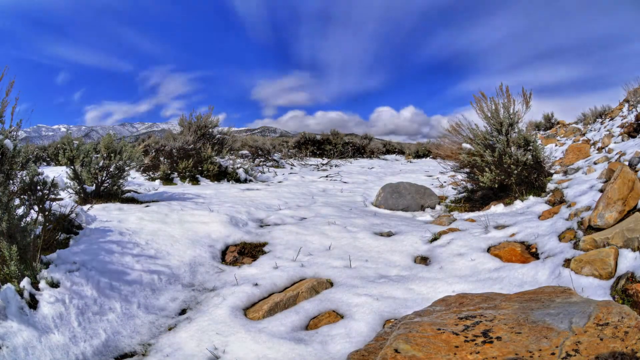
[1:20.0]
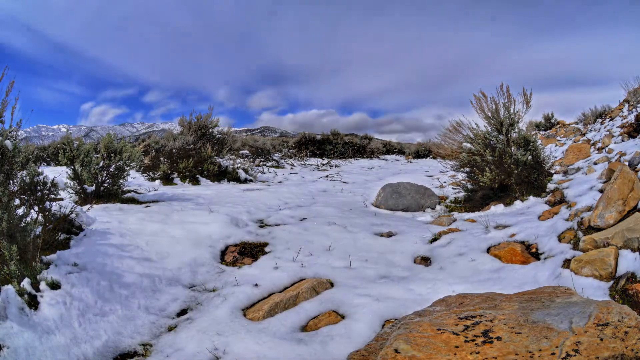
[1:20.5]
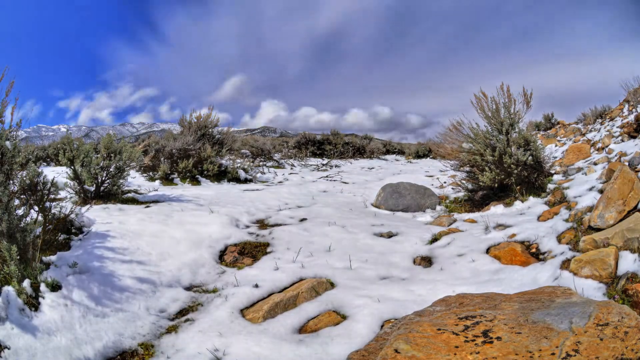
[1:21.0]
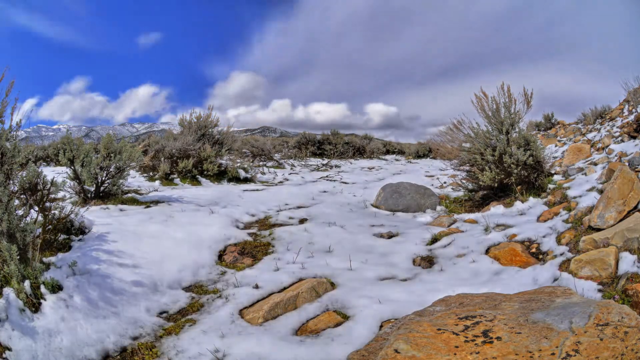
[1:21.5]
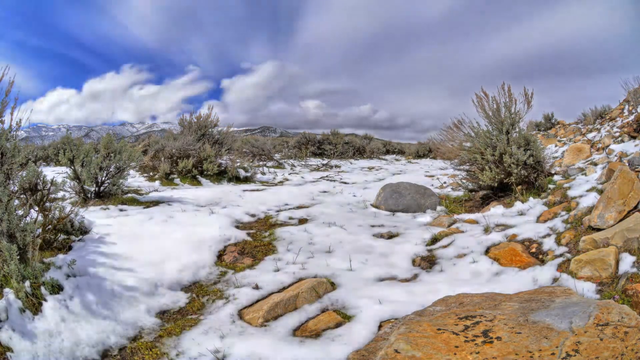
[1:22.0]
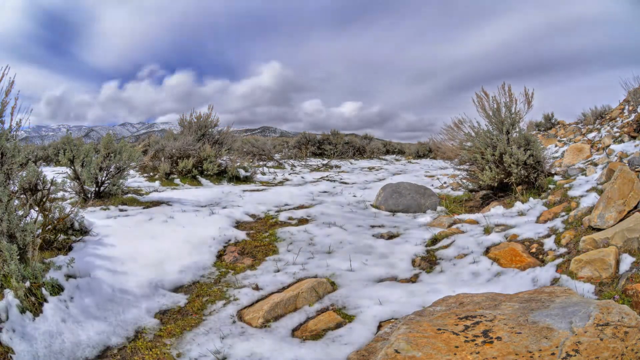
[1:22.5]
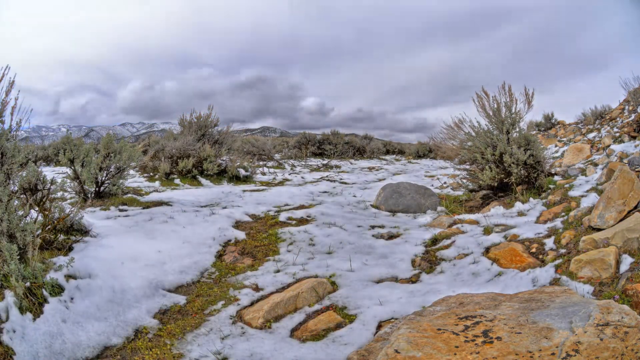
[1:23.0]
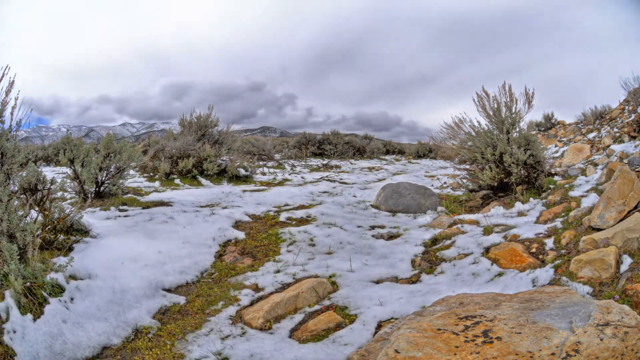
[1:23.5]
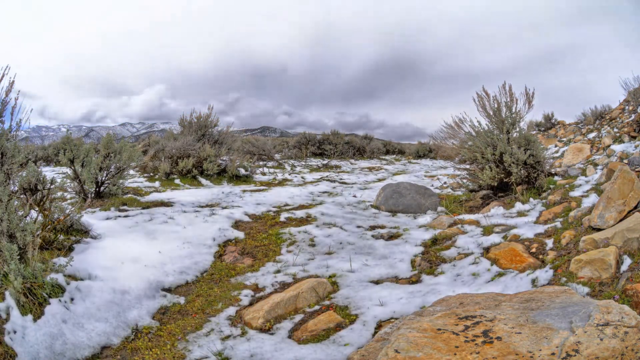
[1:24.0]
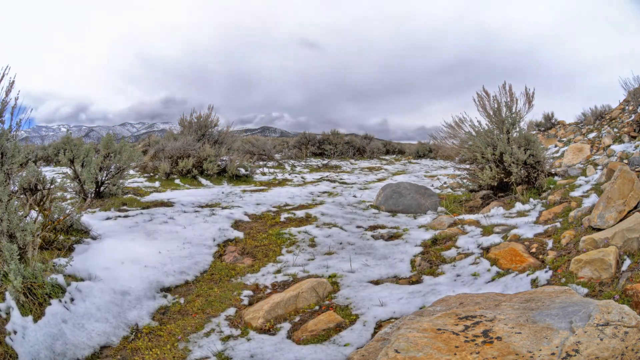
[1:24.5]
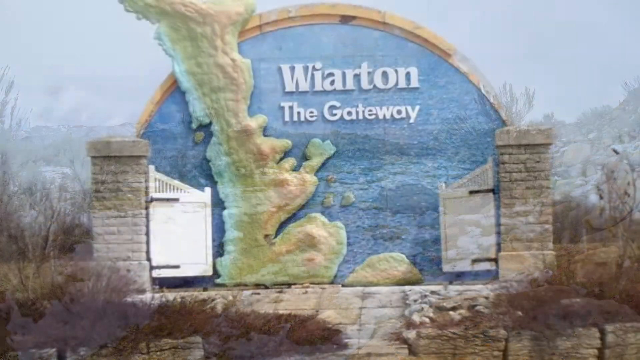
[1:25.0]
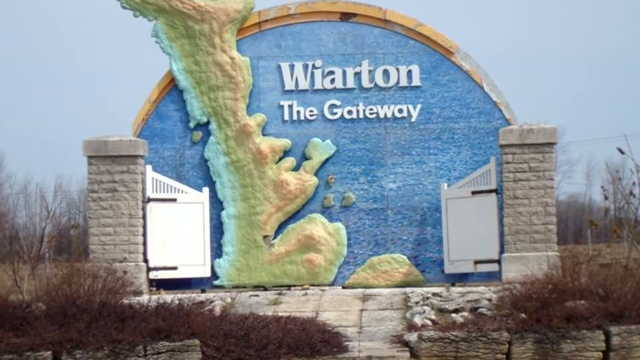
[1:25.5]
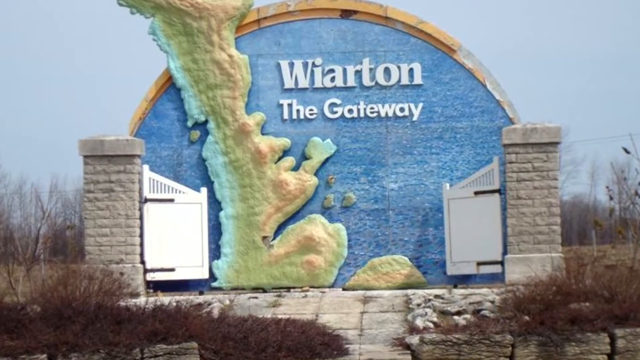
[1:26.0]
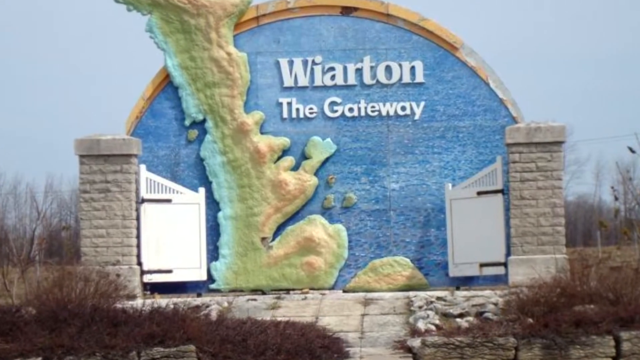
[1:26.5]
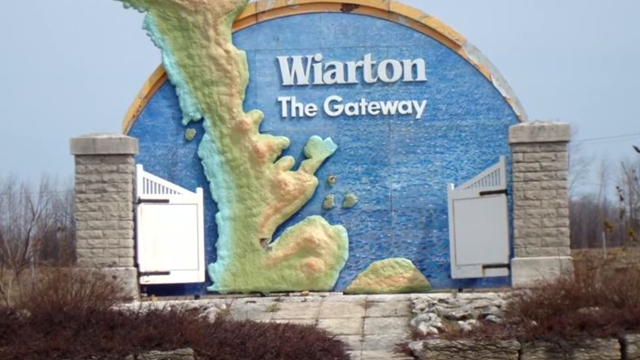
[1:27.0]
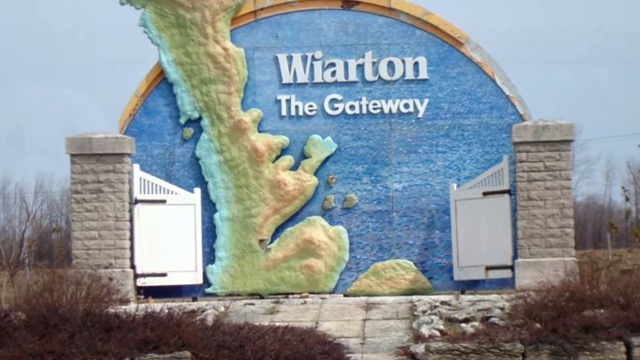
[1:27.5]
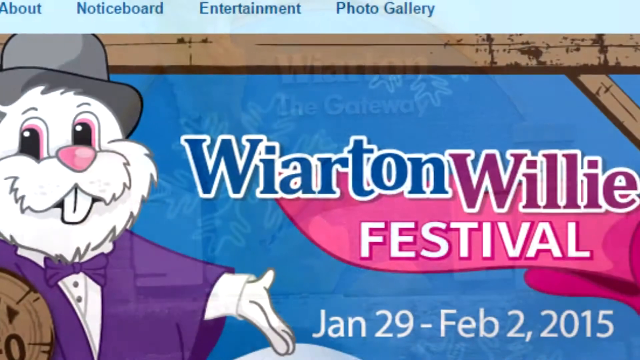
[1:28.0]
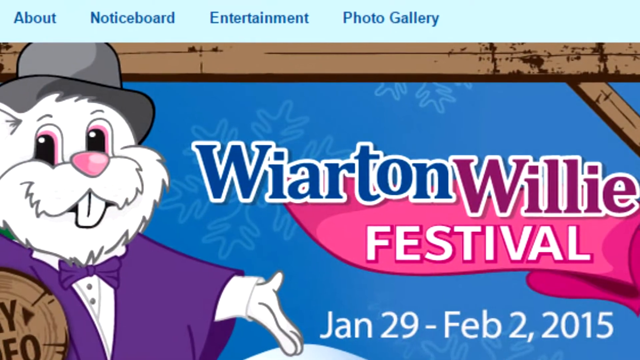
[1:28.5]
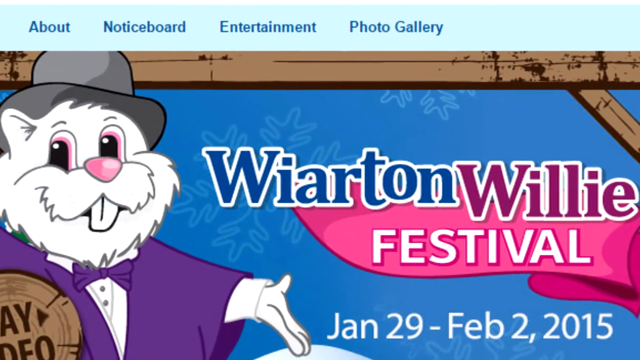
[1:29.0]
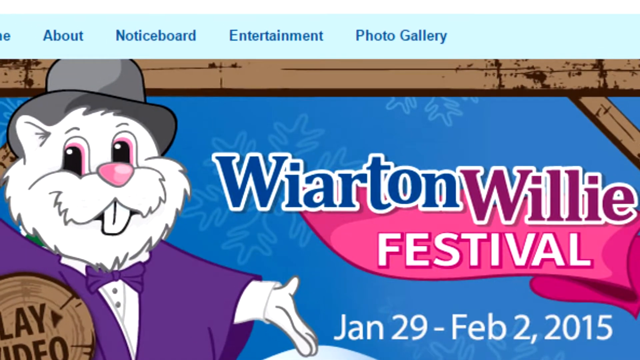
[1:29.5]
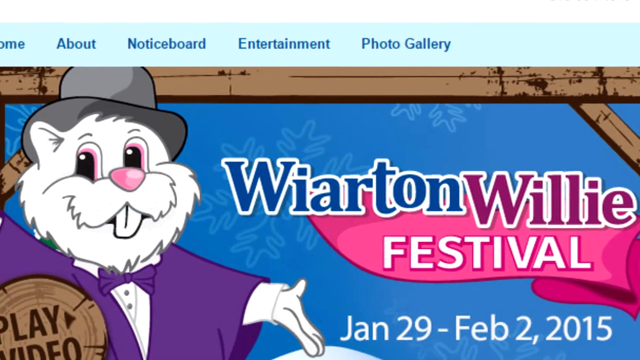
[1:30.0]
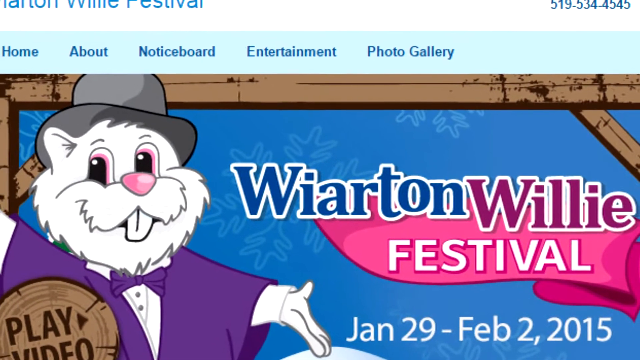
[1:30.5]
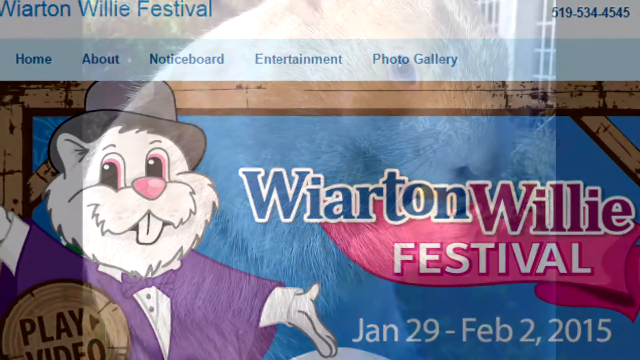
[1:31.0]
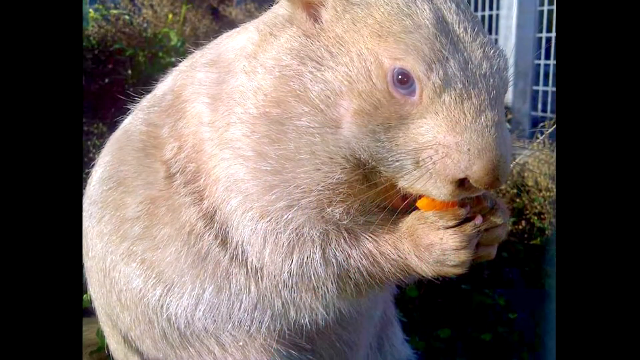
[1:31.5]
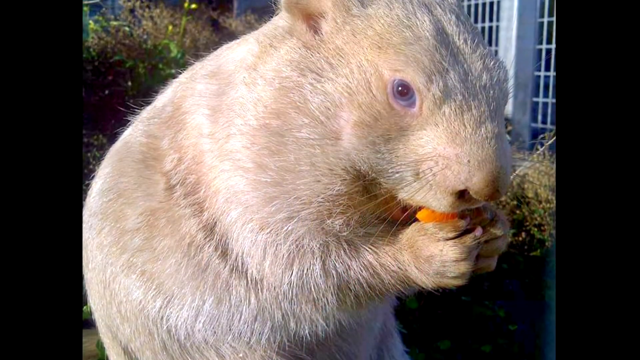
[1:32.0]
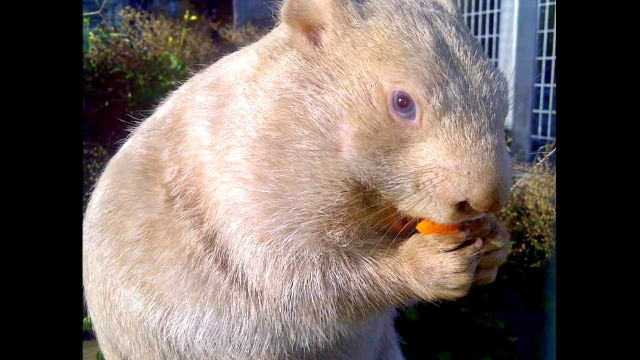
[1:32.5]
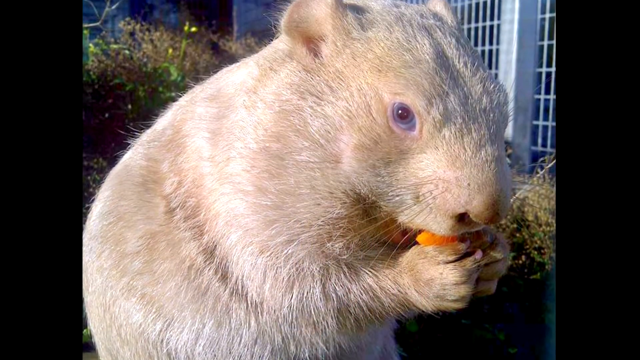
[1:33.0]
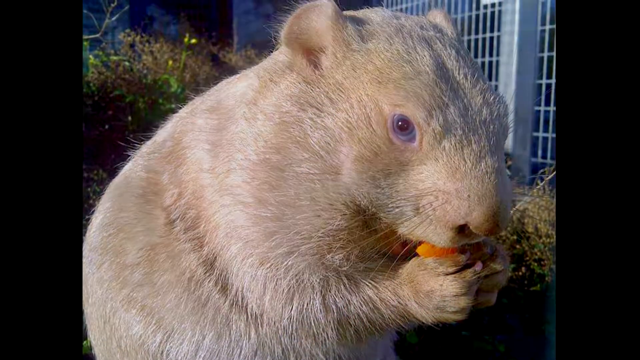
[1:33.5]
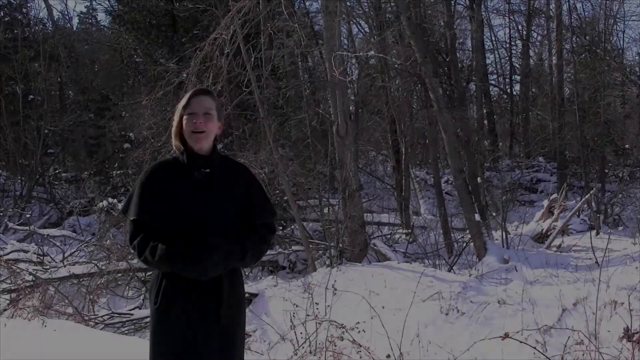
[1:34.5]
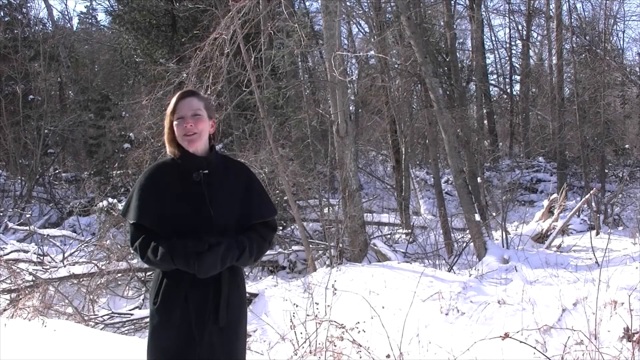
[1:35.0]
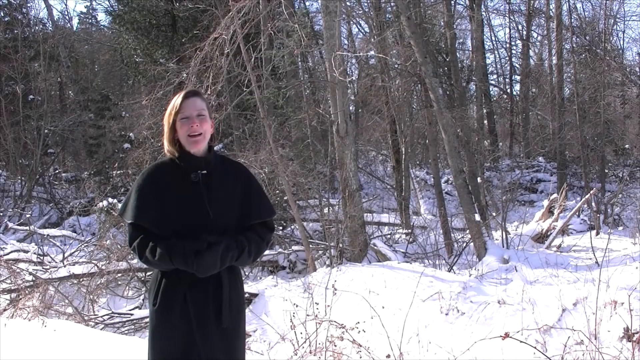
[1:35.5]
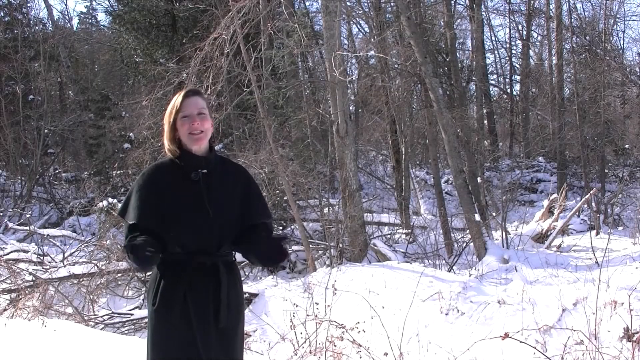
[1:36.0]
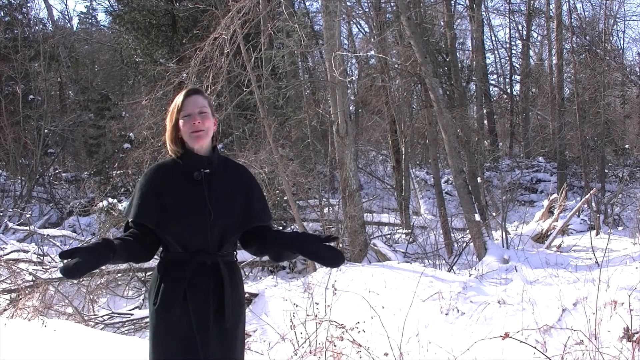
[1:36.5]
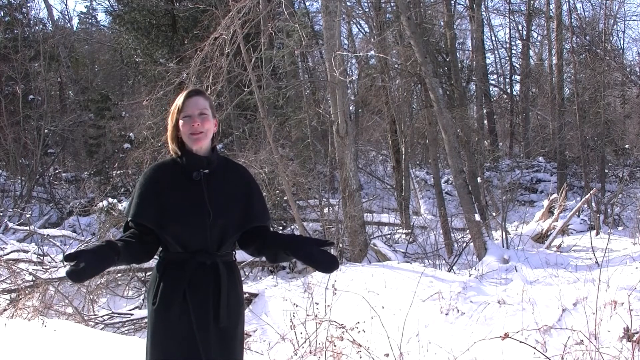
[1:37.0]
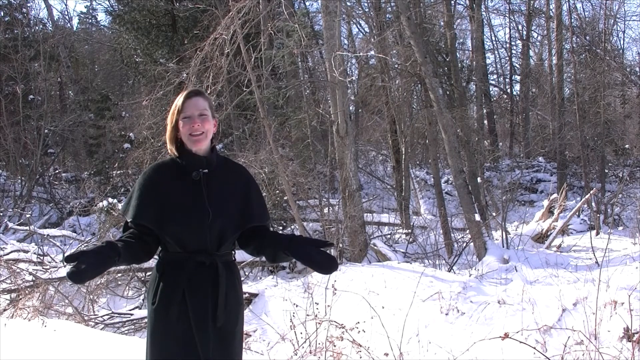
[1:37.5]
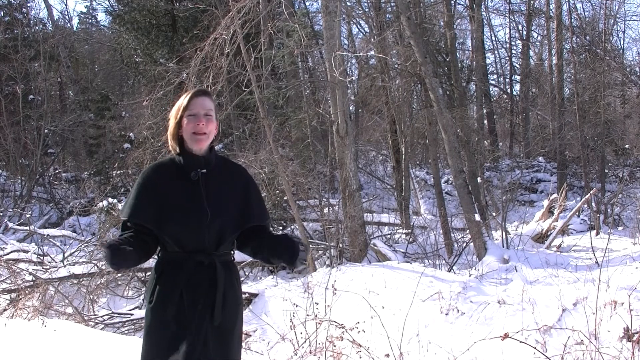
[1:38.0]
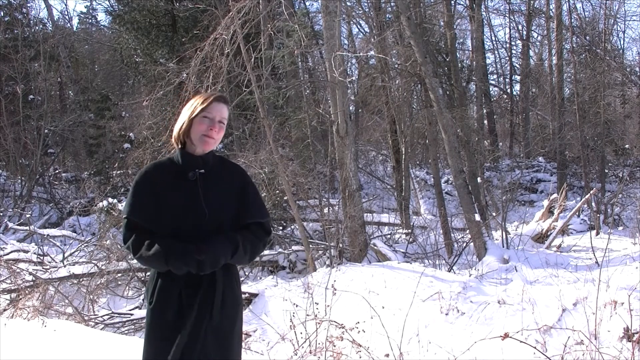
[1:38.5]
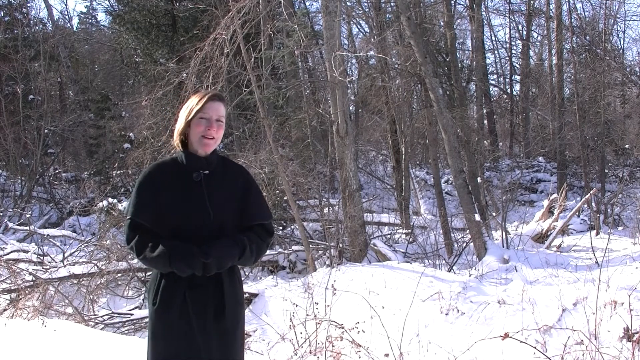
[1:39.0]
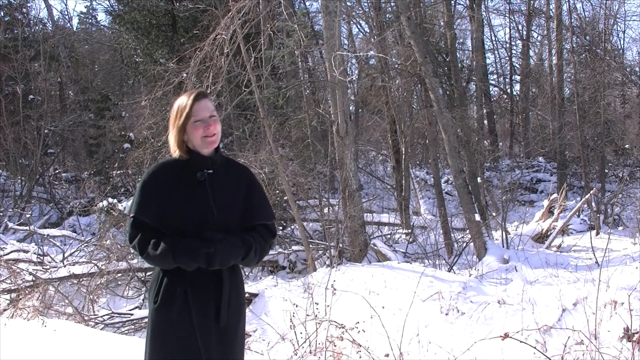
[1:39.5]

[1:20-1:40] An outdoor scene, apparently out in nature, shows small shrubbery on the ground, a slight amount of snow, and what appear to be mountains in the distance. Rocks and boulders of small and medium sizes are strewn about, especially on the right side of the screen. The view appears to be on a path, with shrubbery lining the area. Clouds move quickly toward the distant middle center against a blue sky, which slowly clouds over completely. The view changes to a display in the center of the screen reading "Wiarton the gateway" over blue ocean, with an island, possibly Britain, to the right. A narrow stone arch goes all the way around it, and a gateway is represented by two doors on either side, far apart, attached to stone pillars. This is set in an off-season woodland scene with many leafless trees in the distance, leafless shrubbery in front, and brown grass. A banner for the Wiarton Willie Festival follows: on the left is an all-white creature wearing a top hat and smiling, with black eyes outlined in pink and white, a prominent tooth in the middle, and a purple suit with a purple tie. The banner background is a medium-to-dark blue with snowflakes; "Wiarton" is in blue, "Willie" in dark pink, and "Festival" in white on a pink ribbon banner, with everything but "Festival" outlined in white. The camera pulls back to show that this is a website on a computer screen, with dates for January and February at the bottom and entertainment and other items across the banner. This goes away quickly, and the animal itself appears in the center of the frame, taking up a good portion of it, eating a carrot held with both arms in front of its mouth. Behind it is a gate or crate of some kind with white lattice and a white pillar. It looks right at the camera, and its eye has a blue iris with a black center. The camera moves up, and the screen goes to black. The presenter returns, speaking with her hands in front of her and her head moving slightly side to side; she shakes her head, and her hands come out to either side of her body at waist level, palms up and extended. Her hair moves a little in a slight breeze. Her hands come back toward her waist and clasp in front of her, and her head turns and tilts slightly to the left, then comes back.